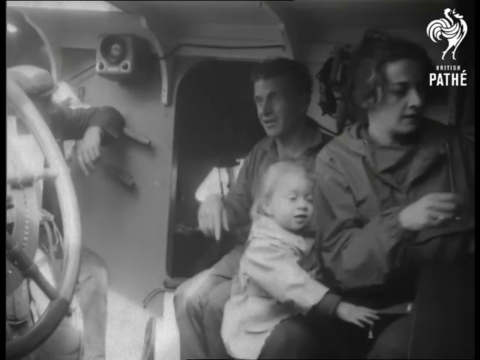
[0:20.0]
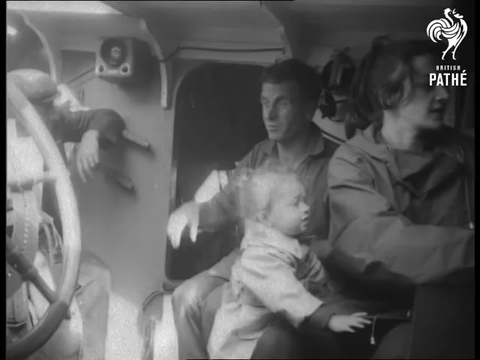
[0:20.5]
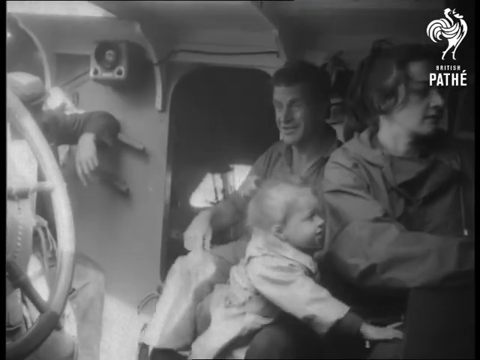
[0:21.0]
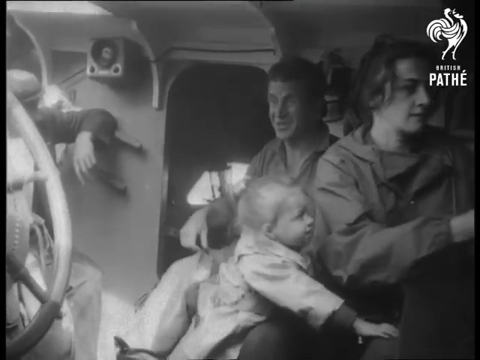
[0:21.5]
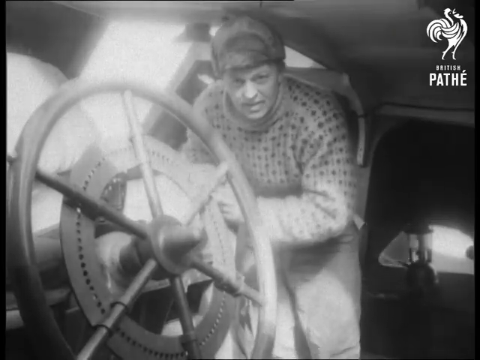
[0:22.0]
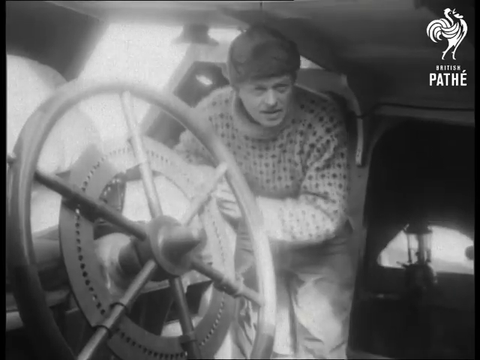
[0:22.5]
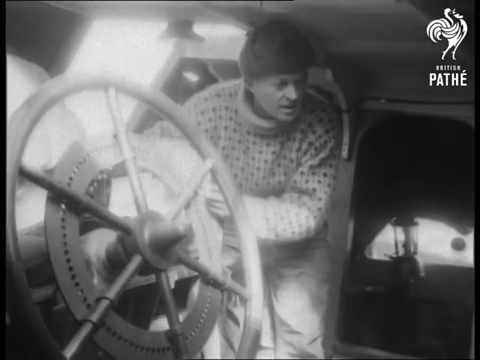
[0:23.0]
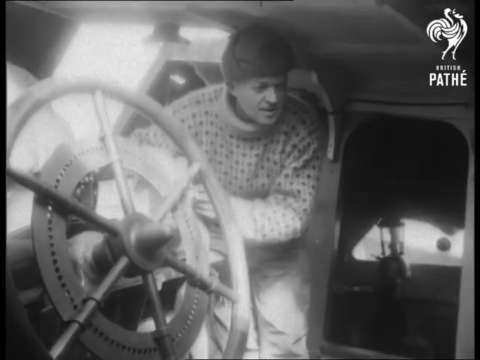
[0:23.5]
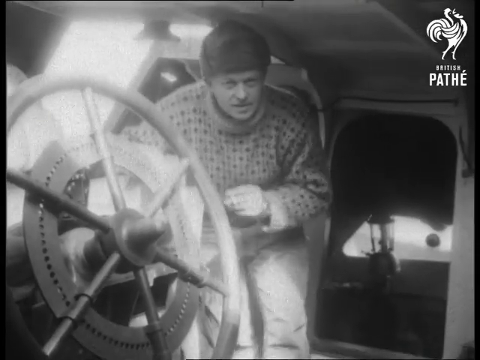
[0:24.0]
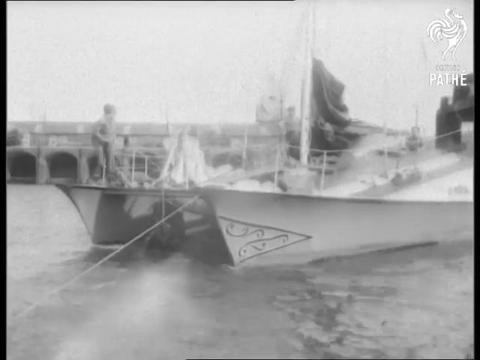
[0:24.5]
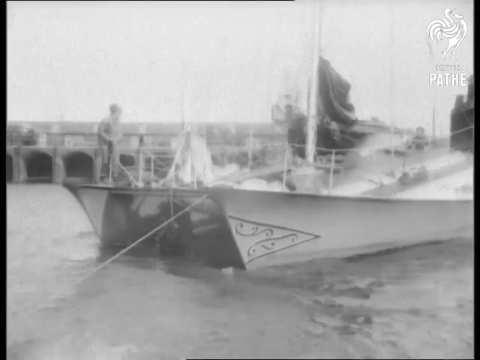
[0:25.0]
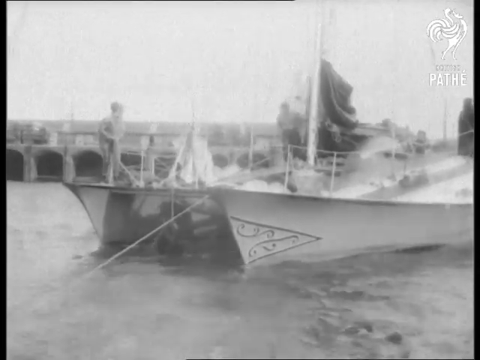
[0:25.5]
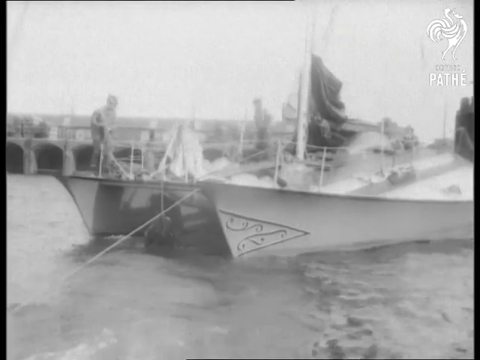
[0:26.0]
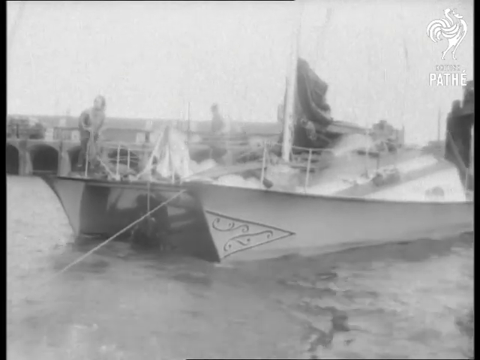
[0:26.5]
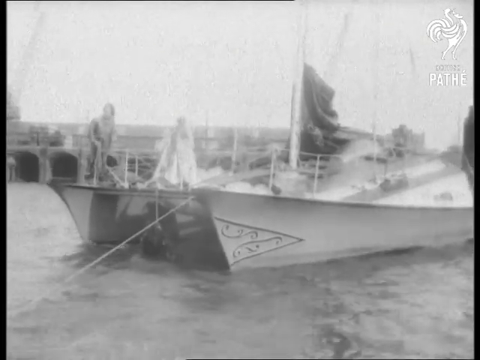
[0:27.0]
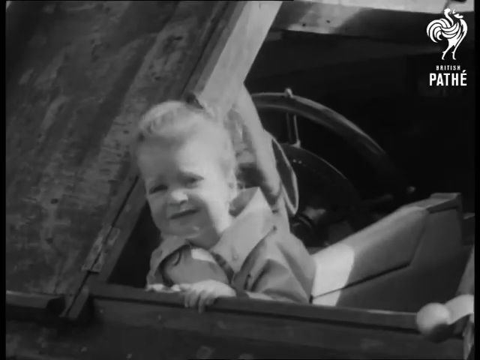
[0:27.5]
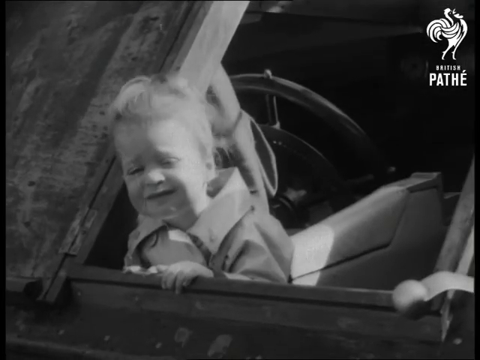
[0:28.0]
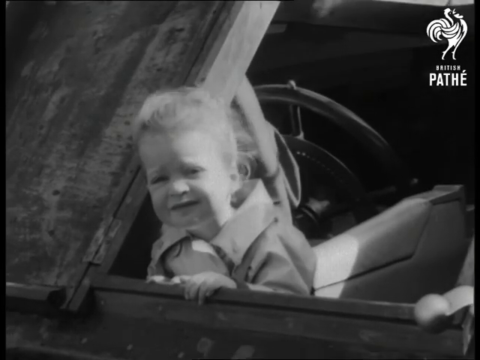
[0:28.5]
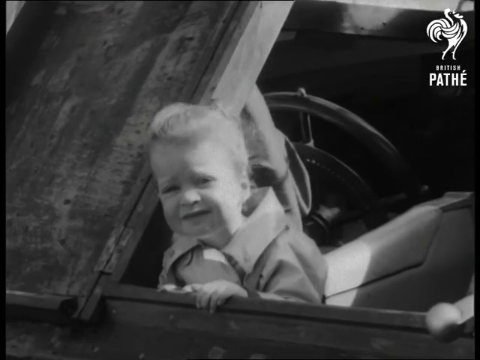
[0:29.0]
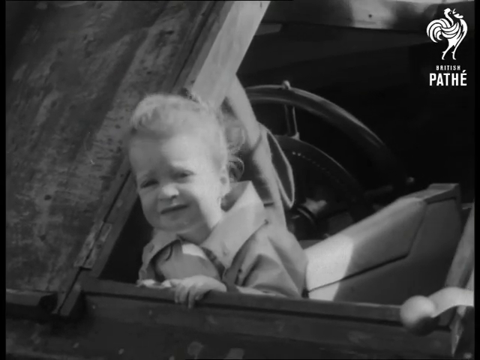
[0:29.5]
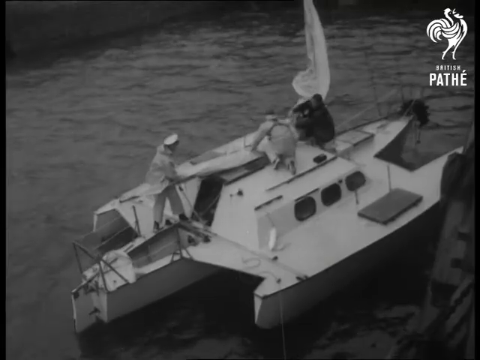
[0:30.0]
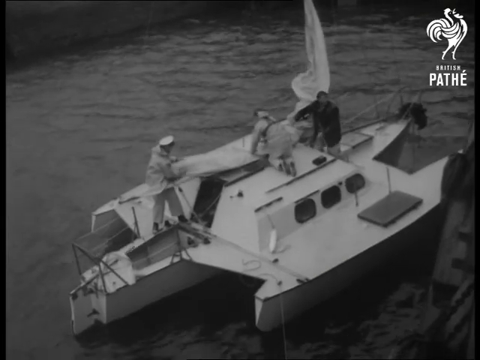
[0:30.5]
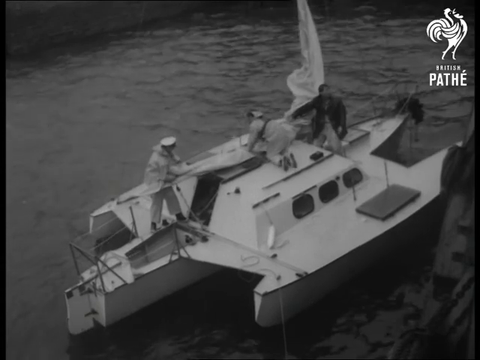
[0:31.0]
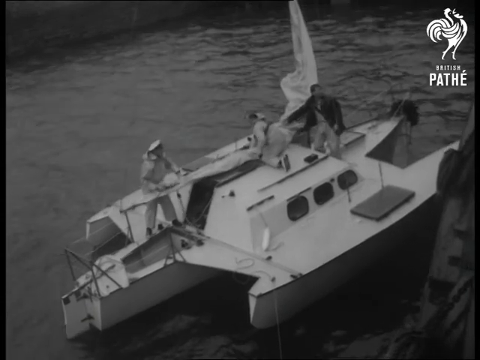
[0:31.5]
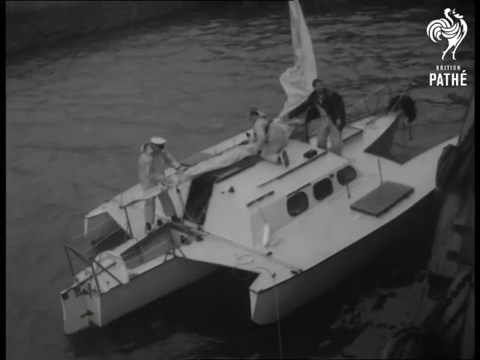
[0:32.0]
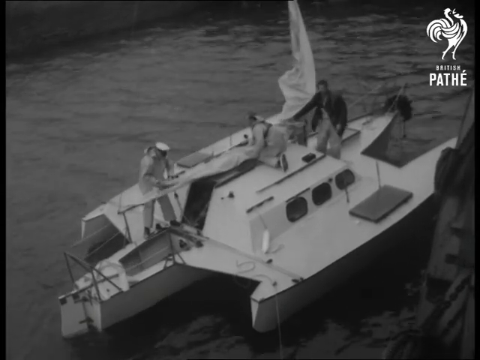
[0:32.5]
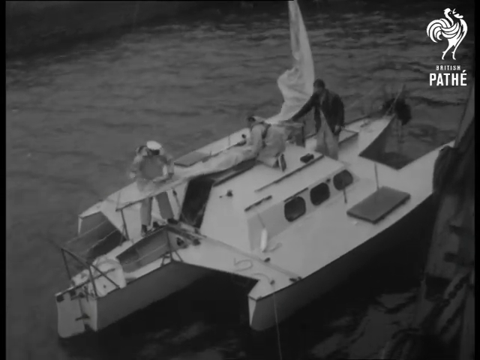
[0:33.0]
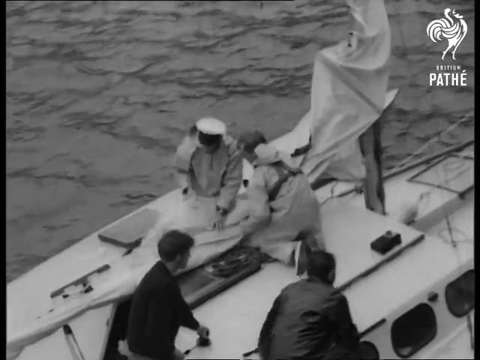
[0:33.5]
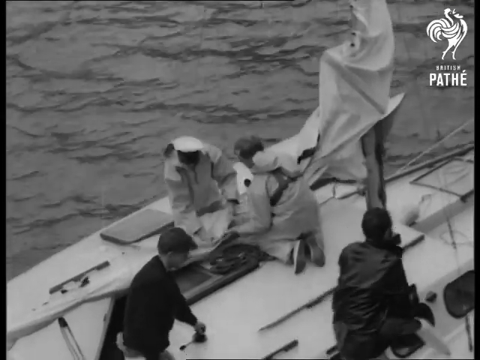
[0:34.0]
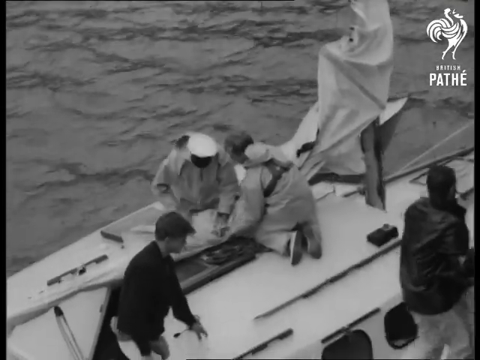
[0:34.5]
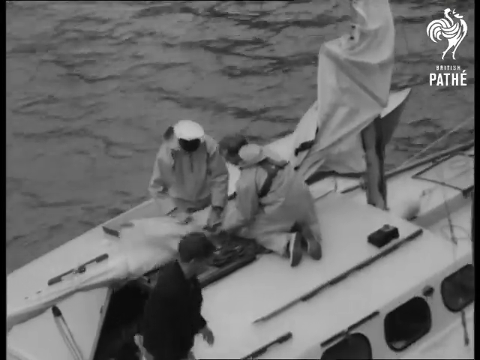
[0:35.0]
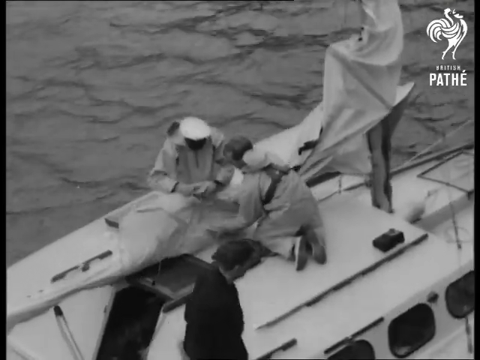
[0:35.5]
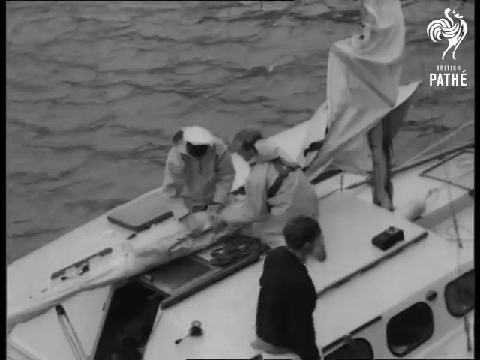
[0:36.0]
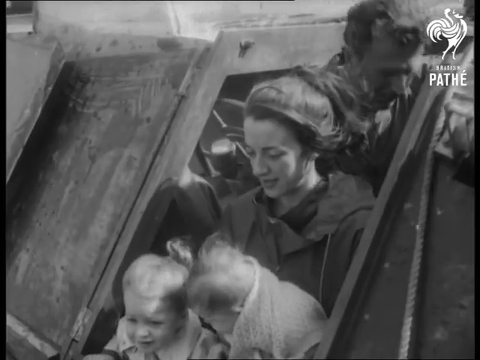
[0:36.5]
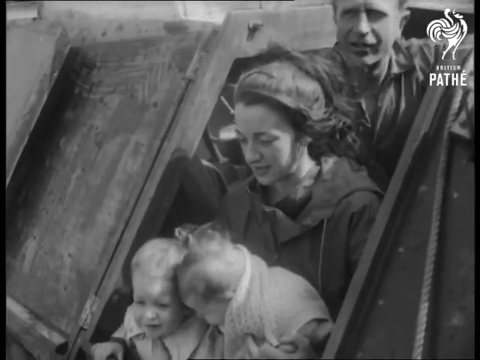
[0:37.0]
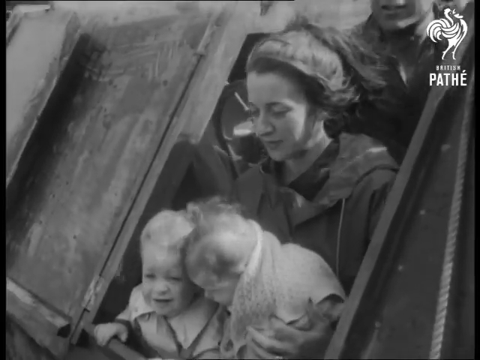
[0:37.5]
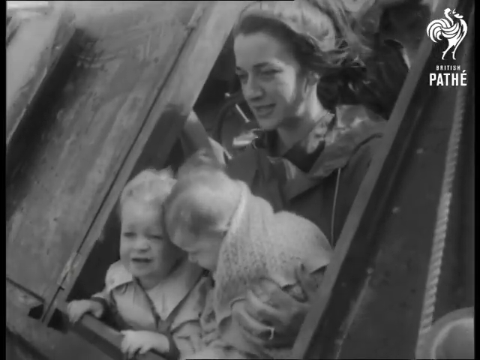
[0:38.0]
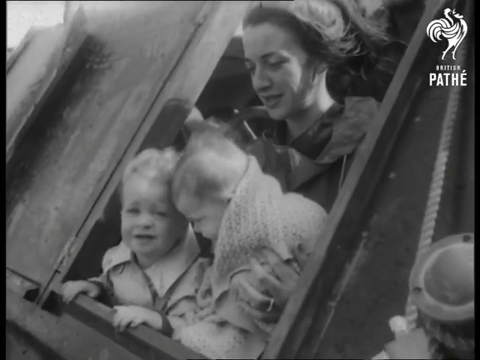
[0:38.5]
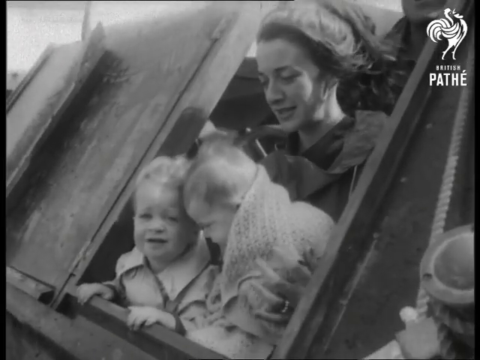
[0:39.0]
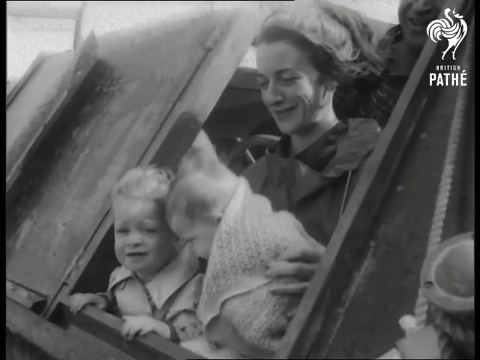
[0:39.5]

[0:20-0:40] The family is inside the boat, and the man talks emphatically about something. A man in a sweater and a Russian-style fur cap stands next to the vessel's steering wheel, explaining something while leaning a little on the wheel. An external shot shows a boat, perhaps the same one, with a rope attached to it; it might be being towed. People are on the deck, and one of them is running. The child looks up from inside the boat directly at the camera. A top-down view shows a boat with three people on it; one crawls along the top, and they appear to be working on the mast, folding it. Four people are then in the shot: two on their knees folding the mast and another walking off camera to the right. The family is seen again looking out from inside the boat: the man, the woman and two children. One child looks at the camera, and the woman is smiling.